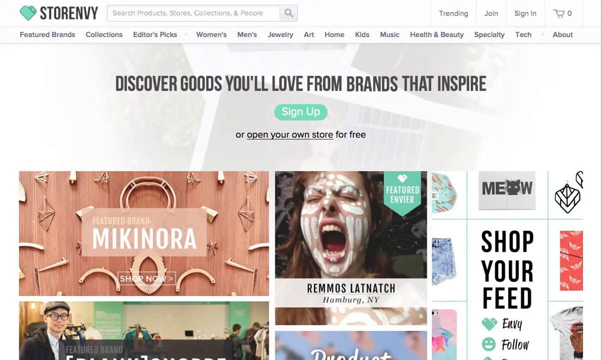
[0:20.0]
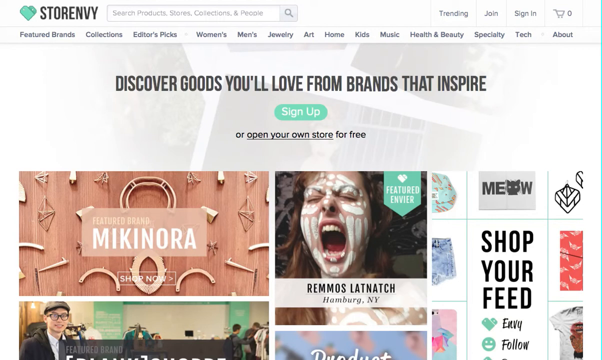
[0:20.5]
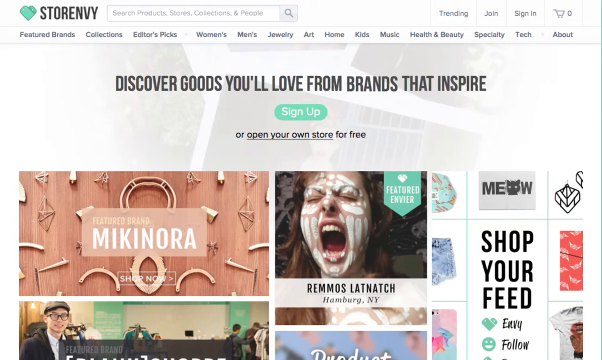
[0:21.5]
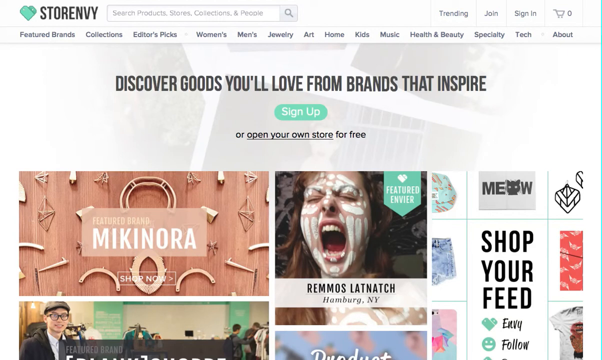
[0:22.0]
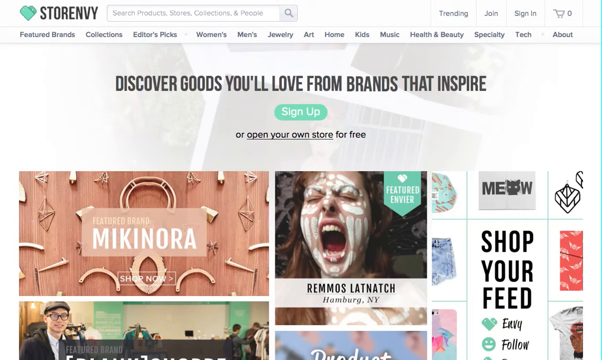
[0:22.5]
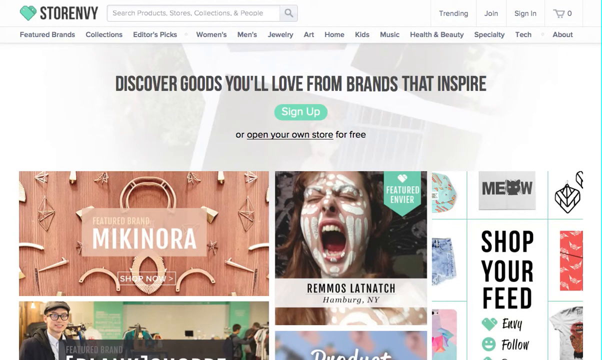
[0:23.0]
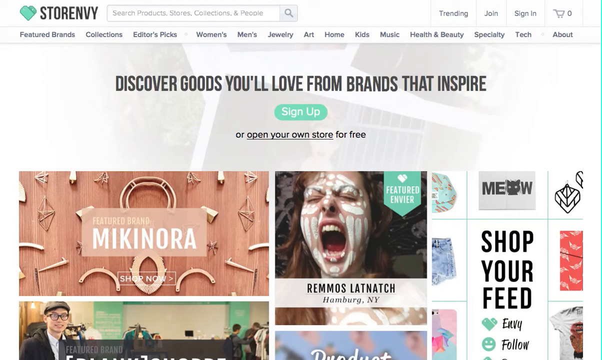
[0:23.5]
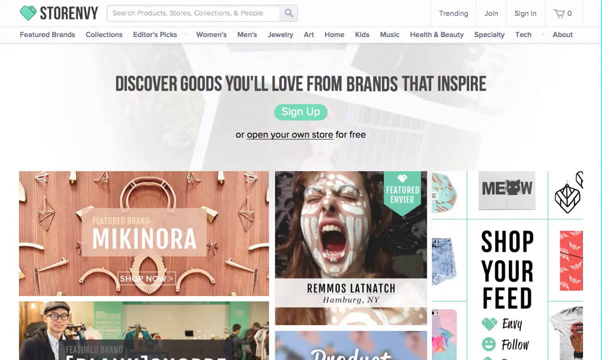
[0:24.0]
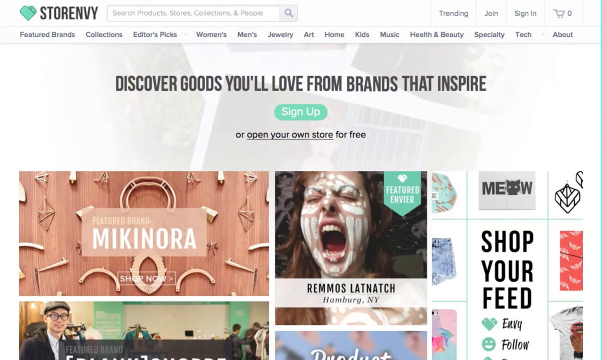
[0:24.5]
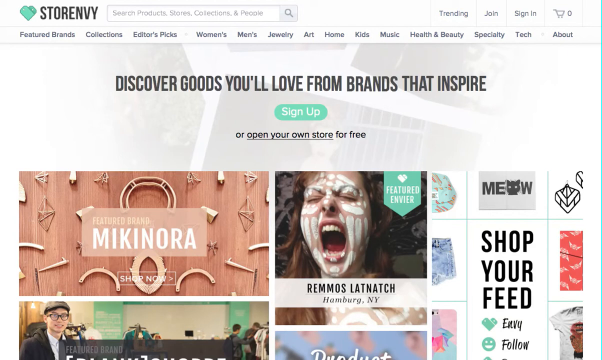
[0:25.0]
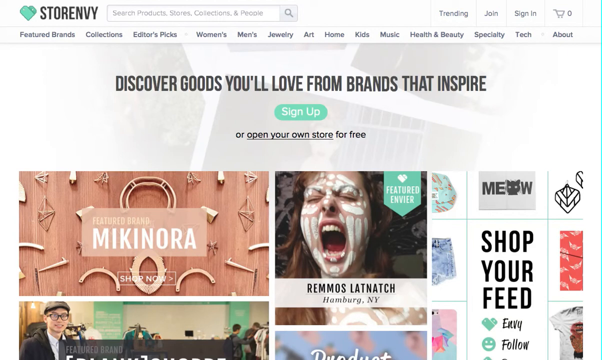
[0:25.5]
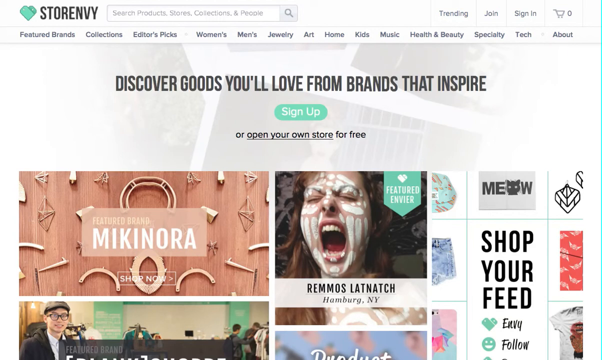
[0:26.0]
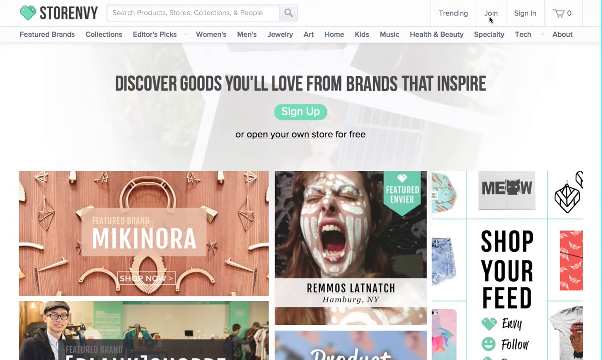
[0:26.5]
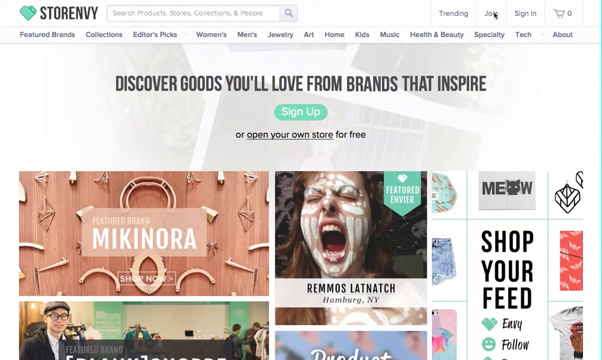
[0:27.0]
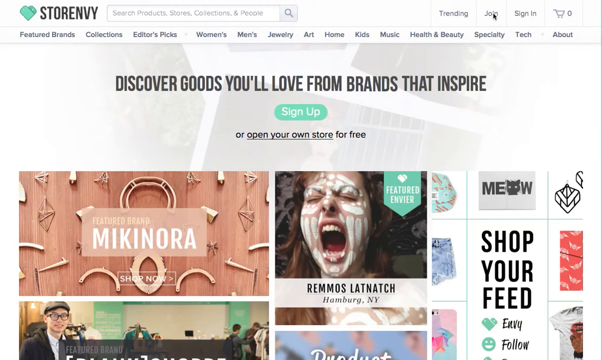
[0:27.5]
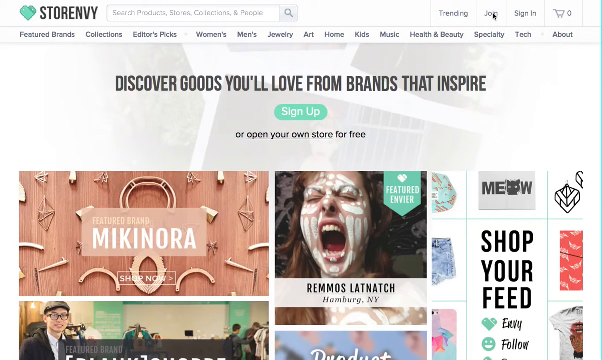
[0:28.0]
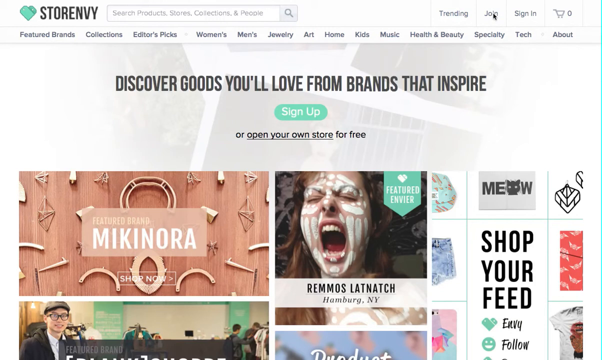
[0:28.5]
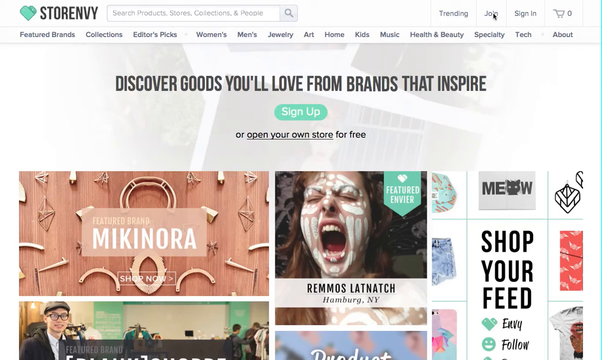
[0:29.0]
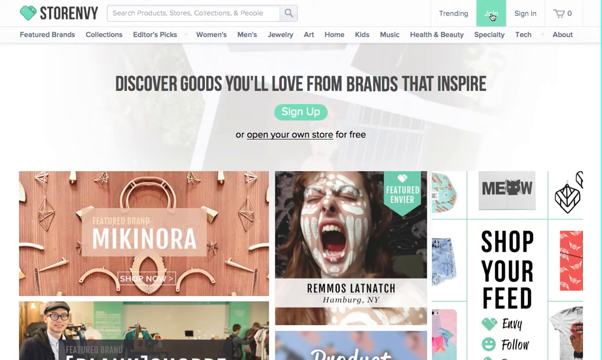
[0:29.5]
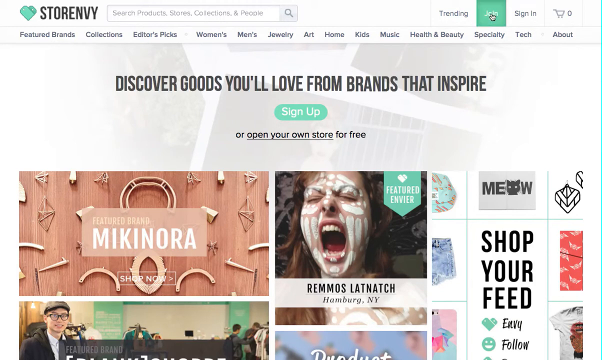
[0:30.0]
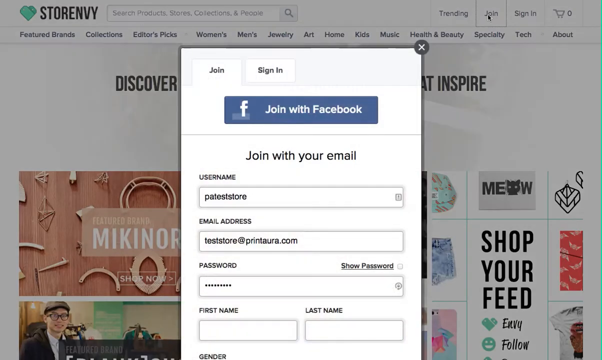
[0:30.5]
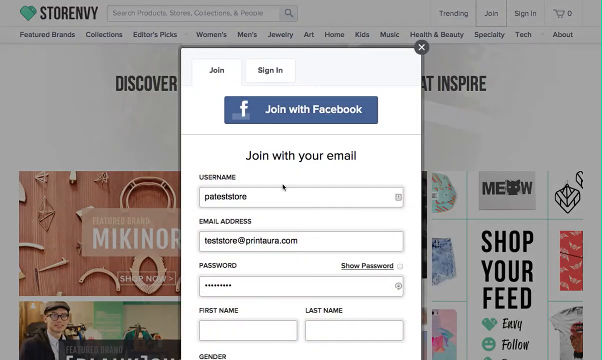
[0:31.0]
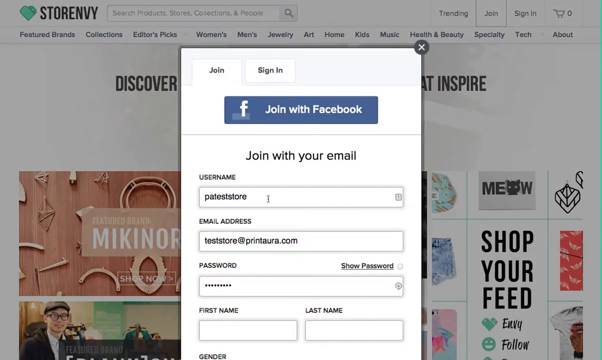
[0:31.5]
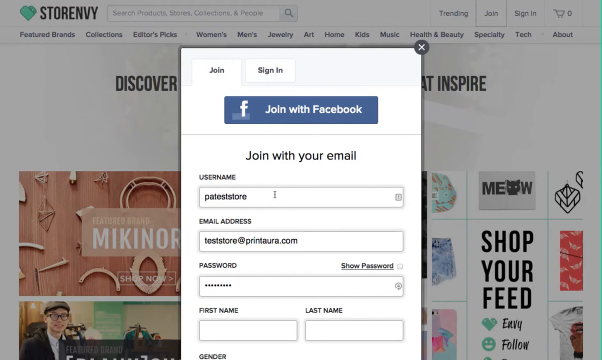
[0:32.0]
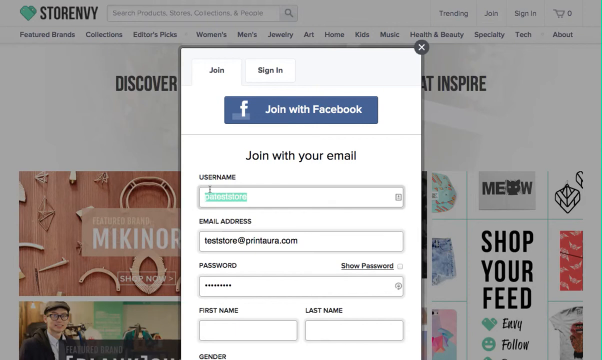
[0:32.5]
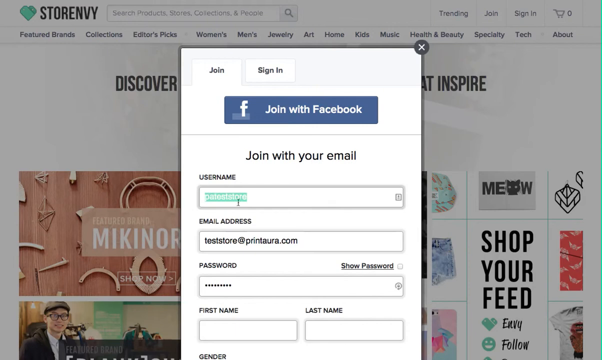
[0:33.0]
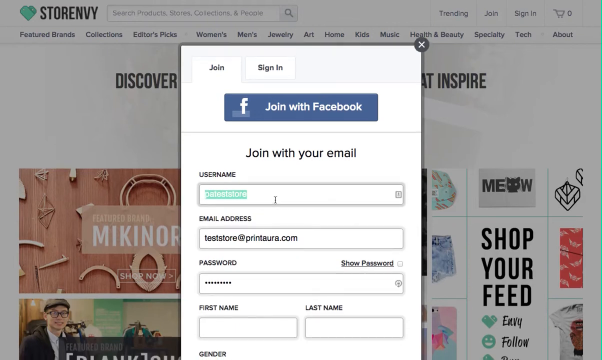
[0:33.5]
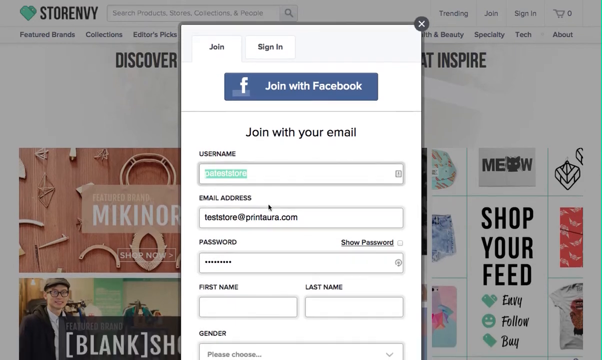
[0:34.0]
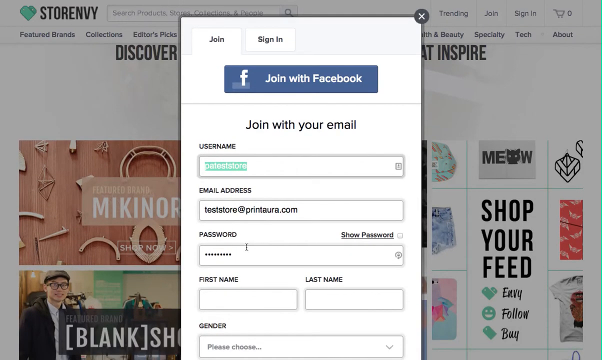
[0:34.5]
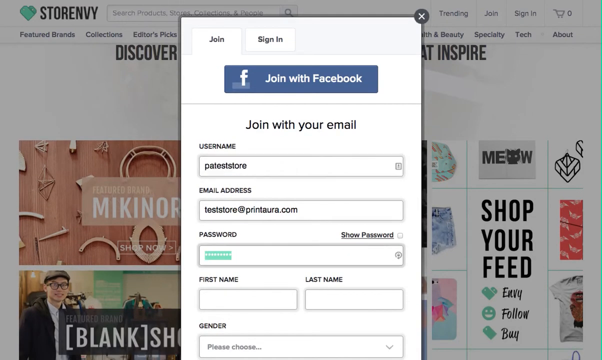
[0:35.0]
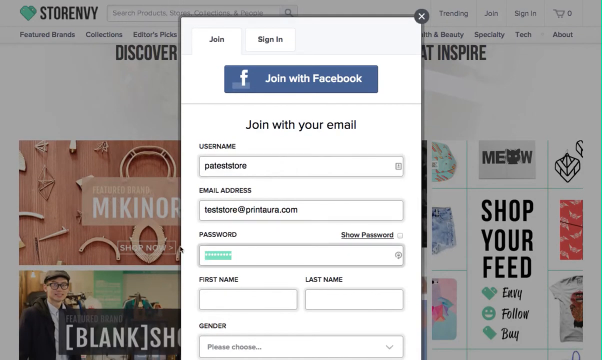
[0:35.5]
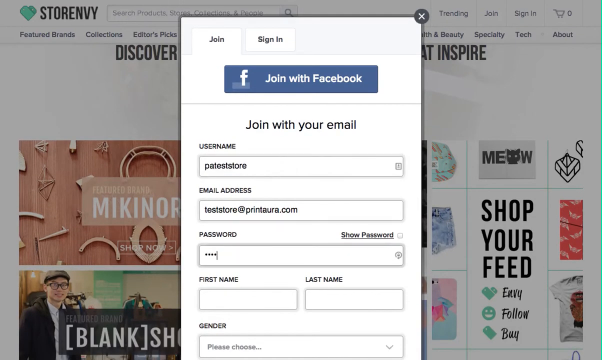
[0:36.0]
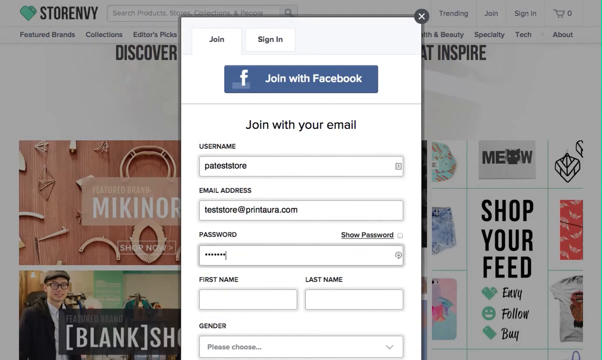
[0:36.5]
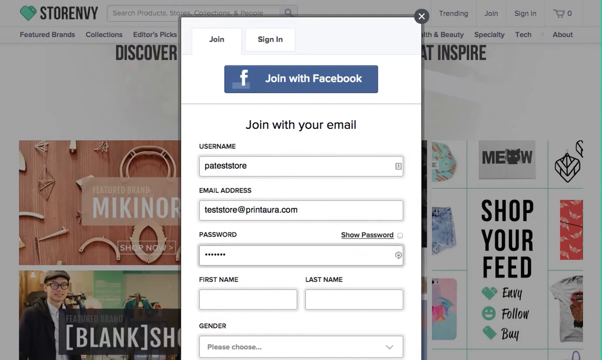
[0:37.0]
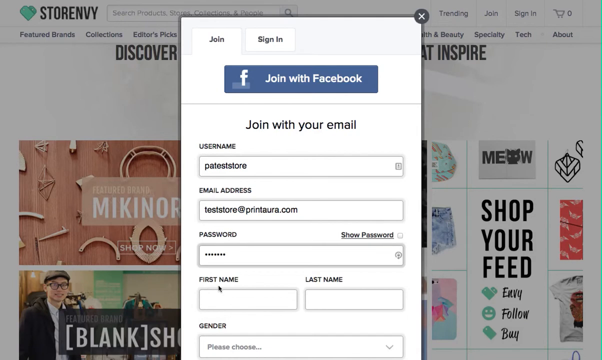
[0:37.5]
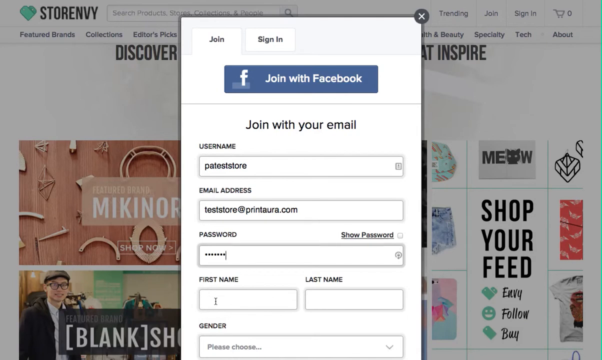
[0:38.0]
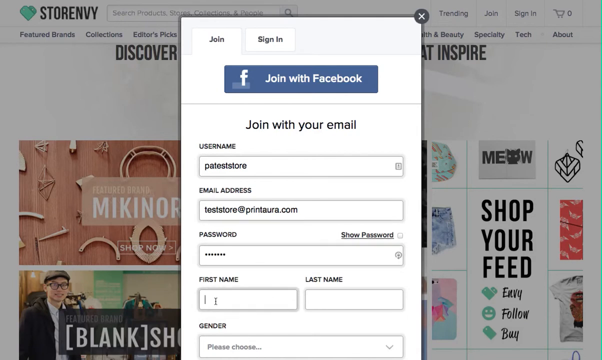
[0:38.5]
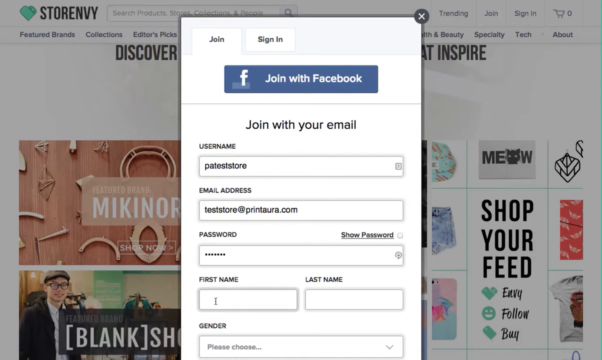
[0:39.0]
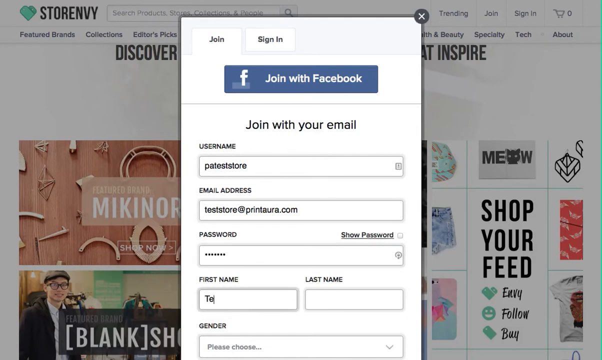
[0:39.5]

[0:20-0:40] The same website screenshot appears. After the user presses the join button at the top of the screen, a pop-up opens in the middle of it. A black mouse pointer hovers over the "join with your email" form, over the username field. The fields are already filled in: the username reads "PA test store", the email address reads "teststore@printora.com", and the password shows as many black dots. Above the "join with your email" text is a large "join with Facebook" button, and above that are join and sign in tabs. The user scrolls down and selects the username, which is highlighted in green, then selects the password field with the mouse, which is also highlighted. They type in a new password, then type "test" into the first name field.